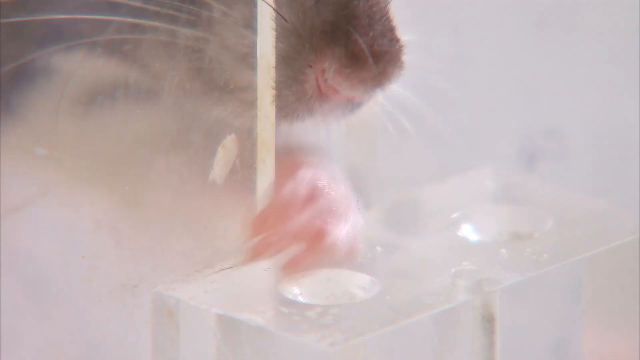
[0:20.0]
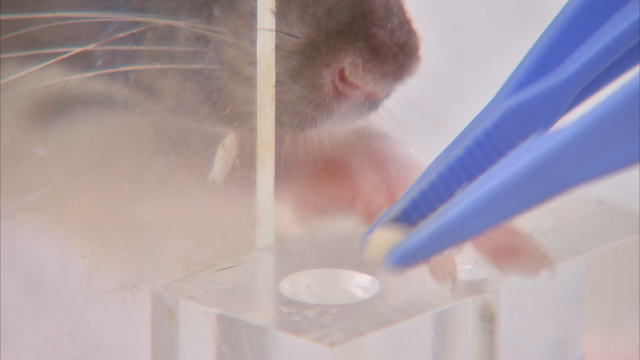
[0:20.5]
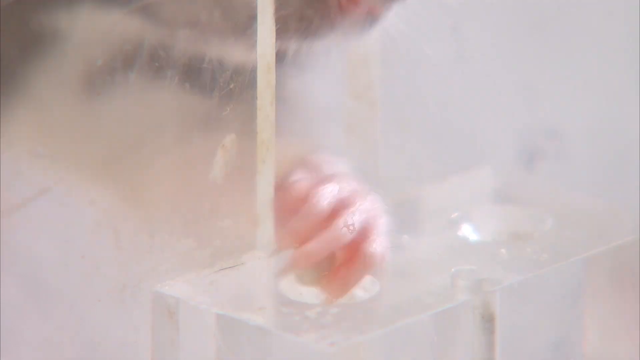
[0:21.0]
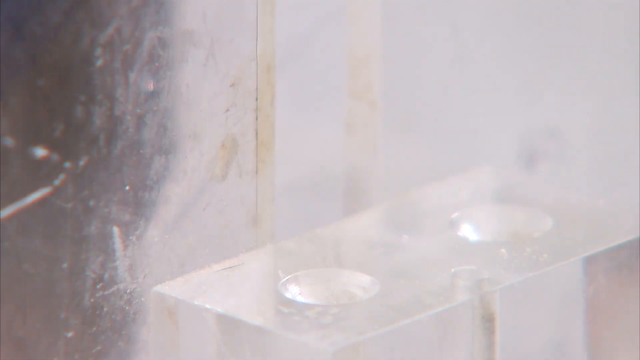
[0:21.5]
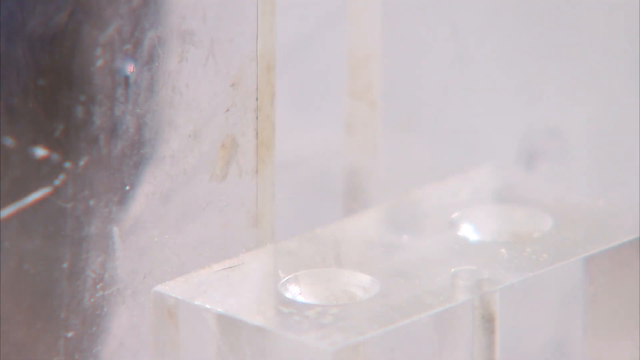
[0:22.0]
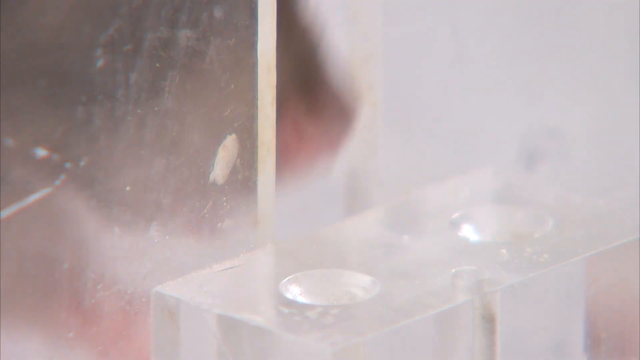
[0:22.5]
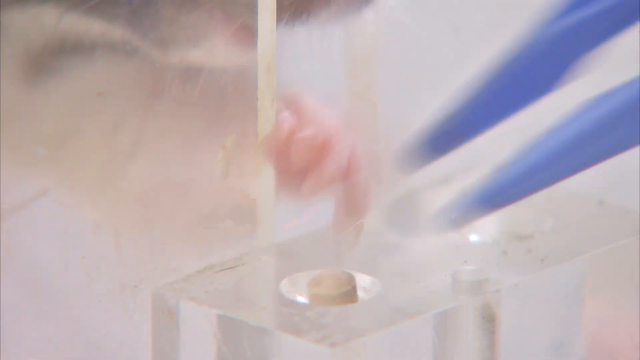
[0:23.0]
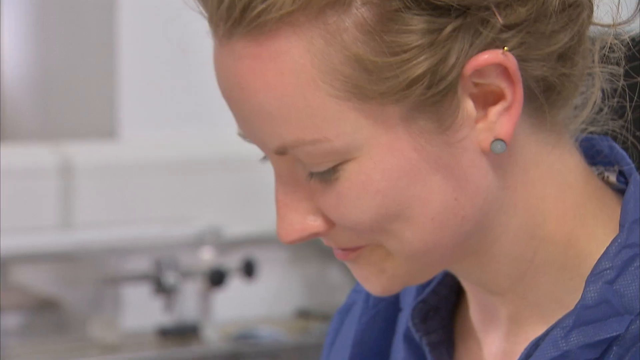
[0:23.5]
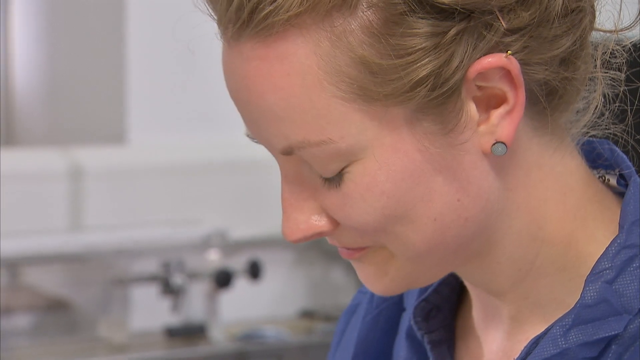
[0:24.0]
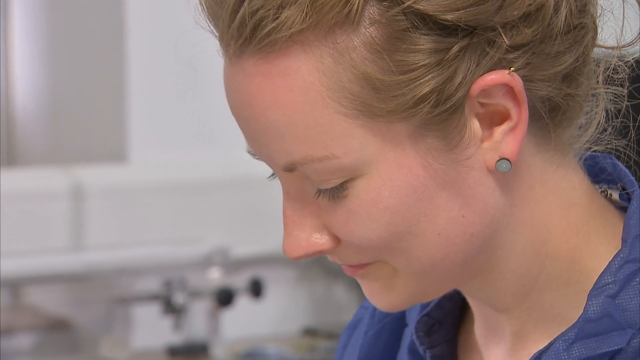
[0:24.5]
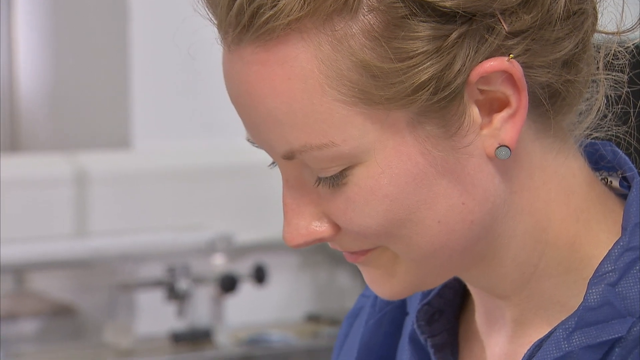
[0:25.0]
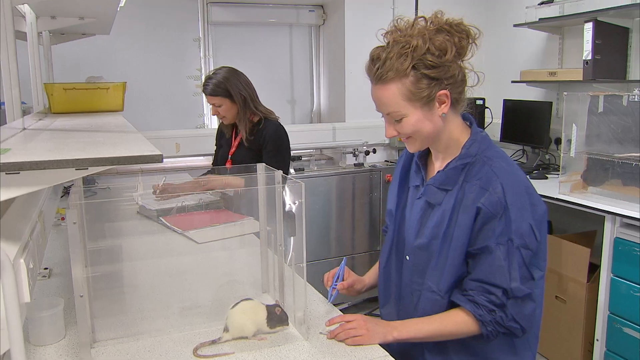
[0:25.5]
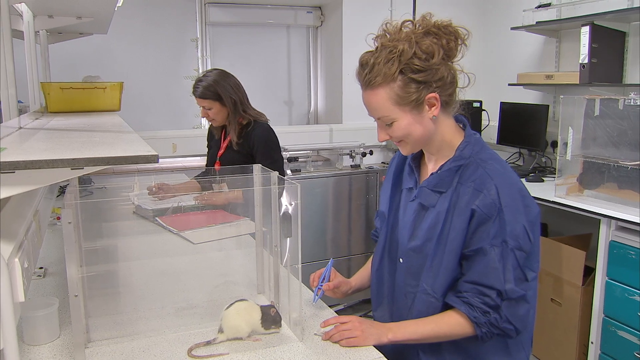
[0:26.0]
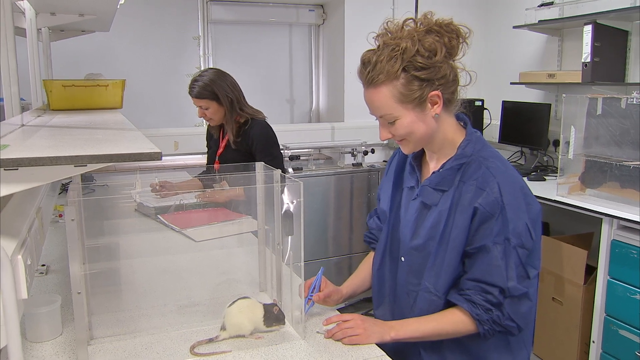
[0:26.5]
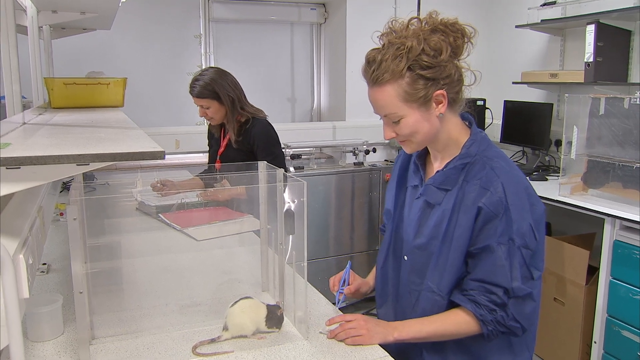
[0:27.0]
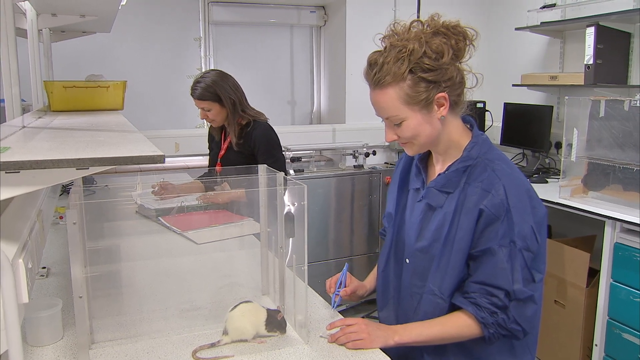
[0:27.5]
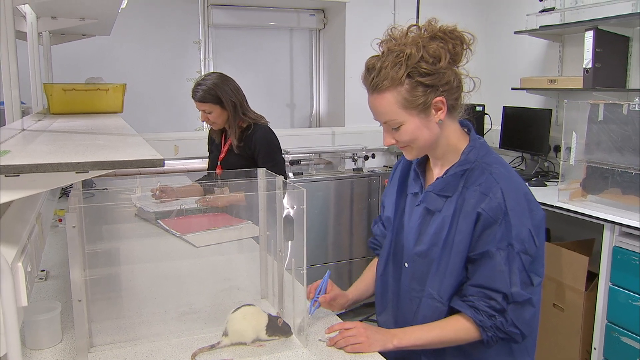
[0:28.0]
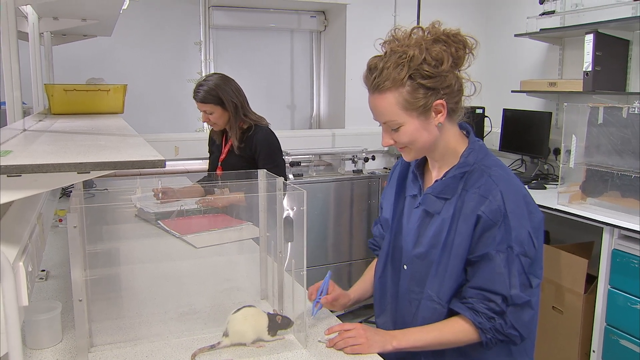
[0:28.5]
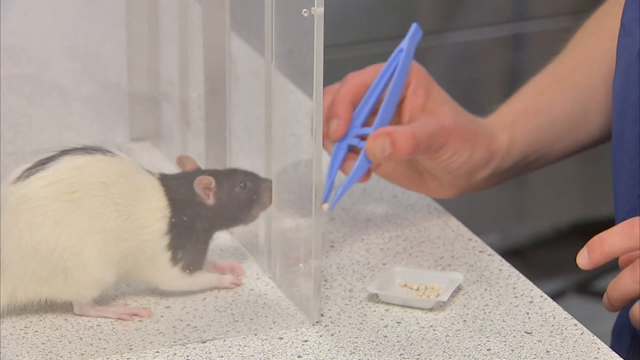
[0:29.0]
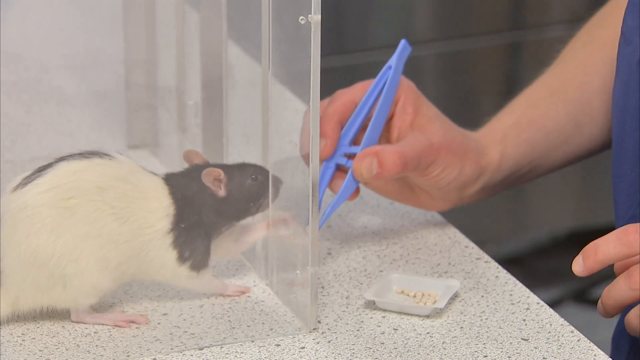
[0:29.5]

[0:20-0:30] The video cuts from the rat retrieving food to two female workers. One has brown hair and wears a red lanyard and a black top; the other wears a blue overall and has tied-up blondish hair. The blonde-haired woman is feeding the rat, while the brown-haired woman fills out what looks to be a journal, apparently making notes about how the rat reacts to being fed. Both seem to be smiling and laughing. The room has various pieces of shelving holding trays, one of them yellow, and binders, with a computer in the corner. A filing cabinet with cyan drawers is on the right, and a box is visible underneath the desk the computer is set up on.